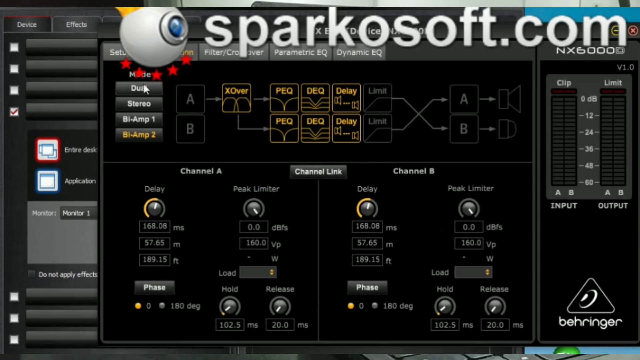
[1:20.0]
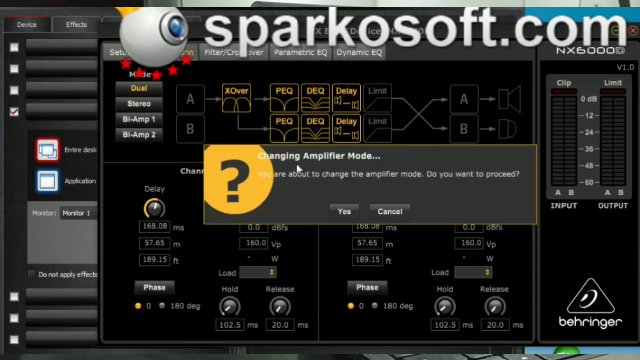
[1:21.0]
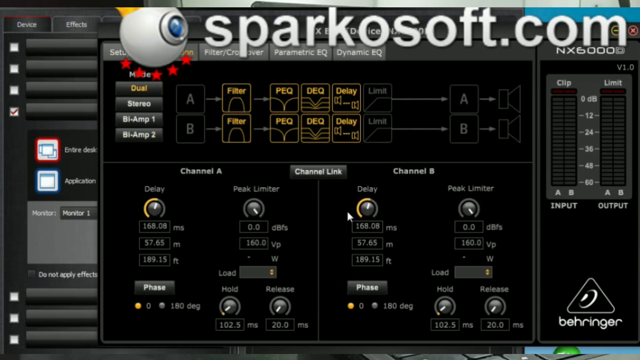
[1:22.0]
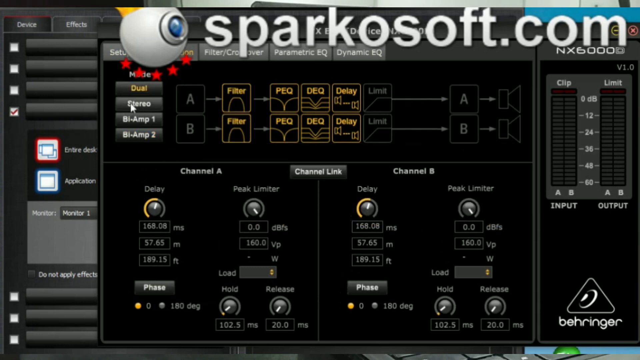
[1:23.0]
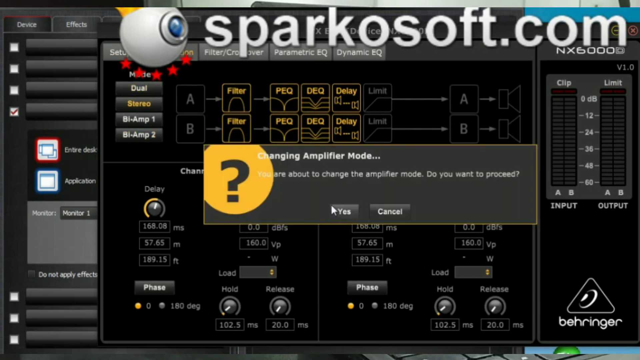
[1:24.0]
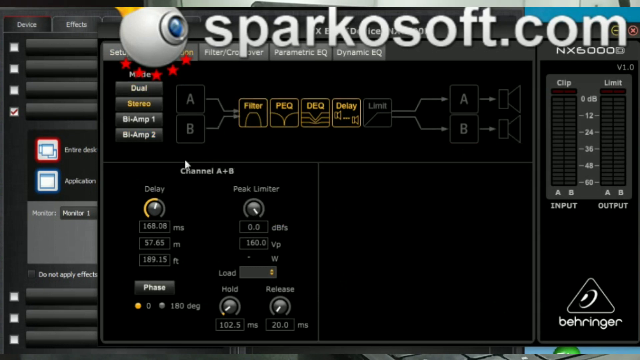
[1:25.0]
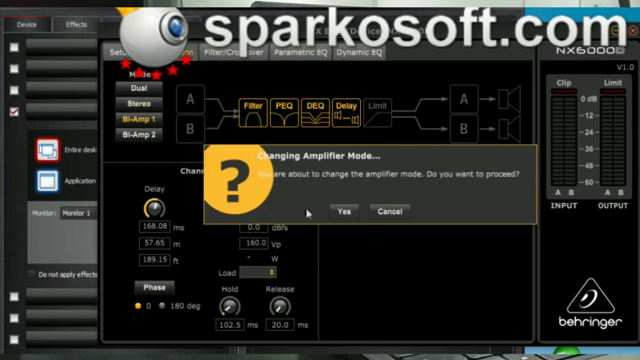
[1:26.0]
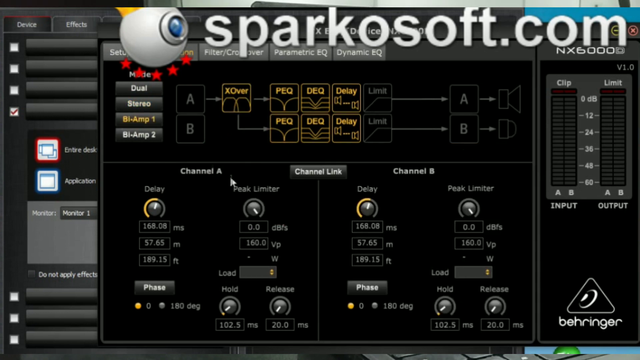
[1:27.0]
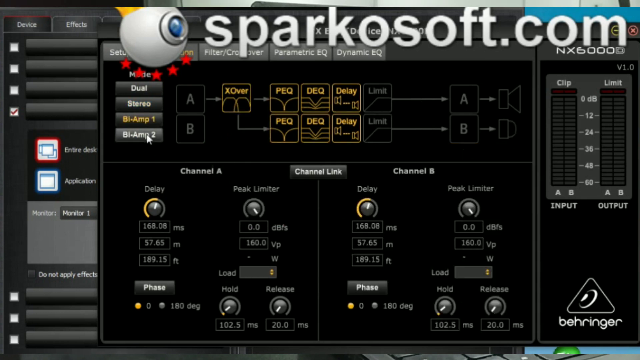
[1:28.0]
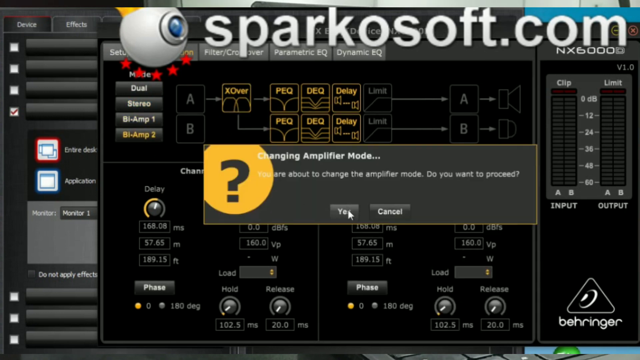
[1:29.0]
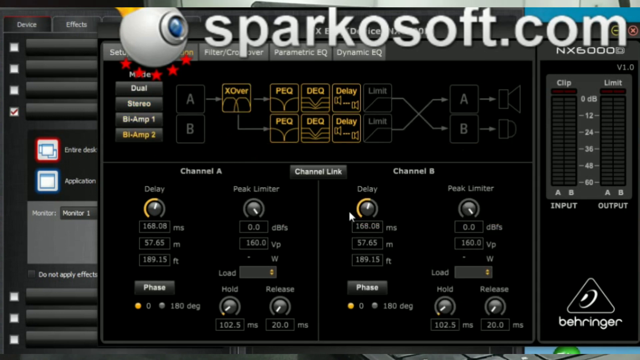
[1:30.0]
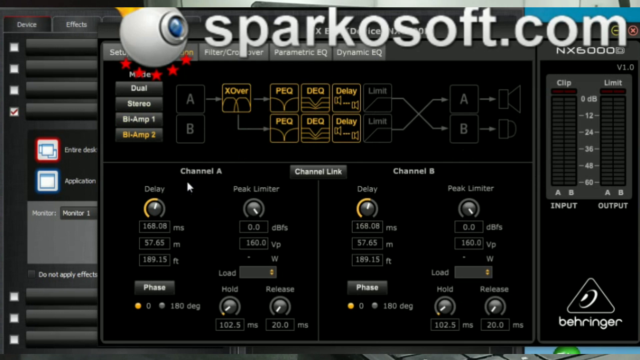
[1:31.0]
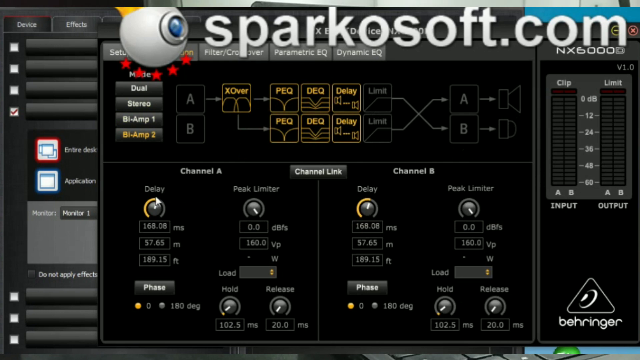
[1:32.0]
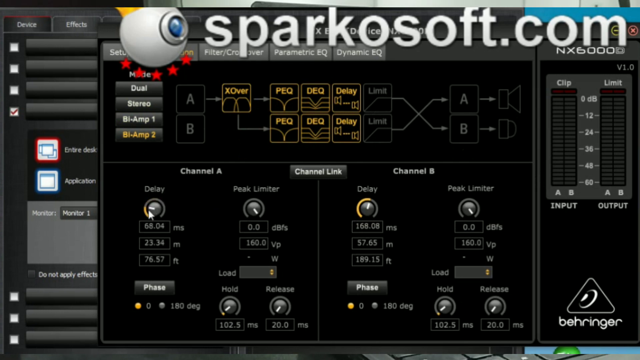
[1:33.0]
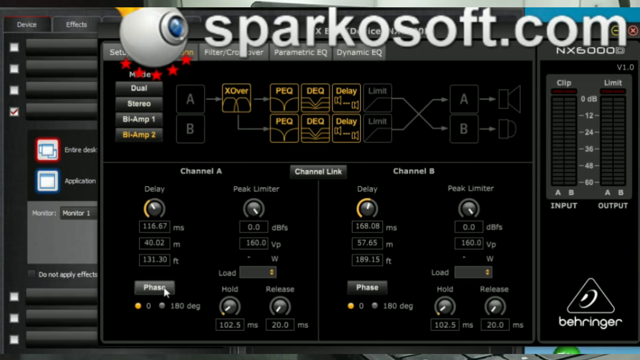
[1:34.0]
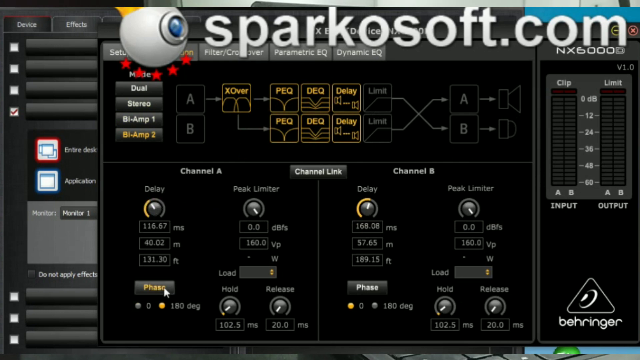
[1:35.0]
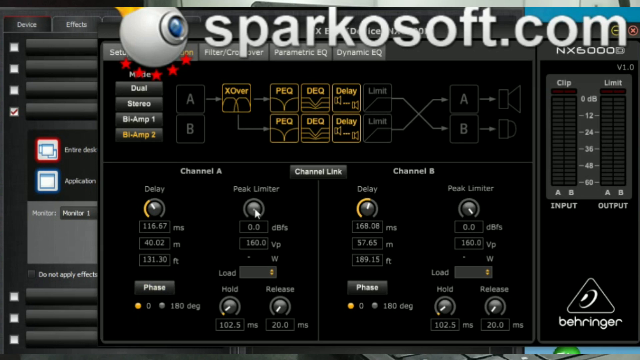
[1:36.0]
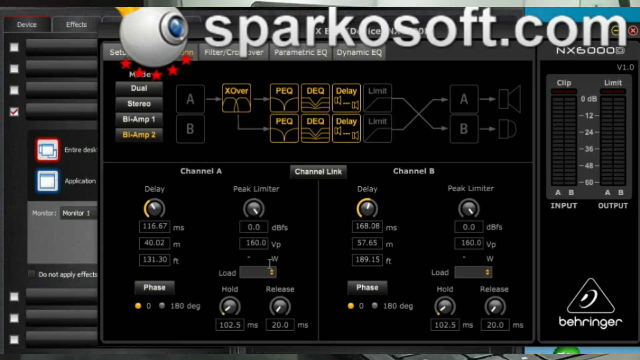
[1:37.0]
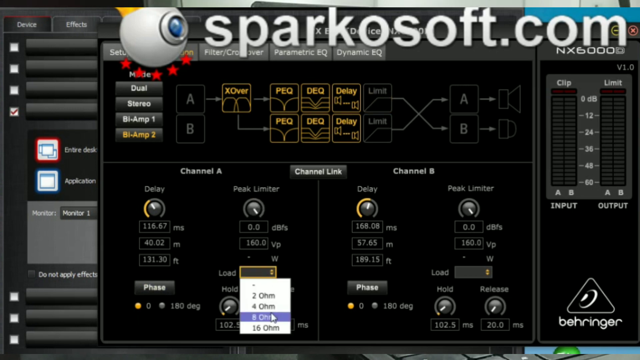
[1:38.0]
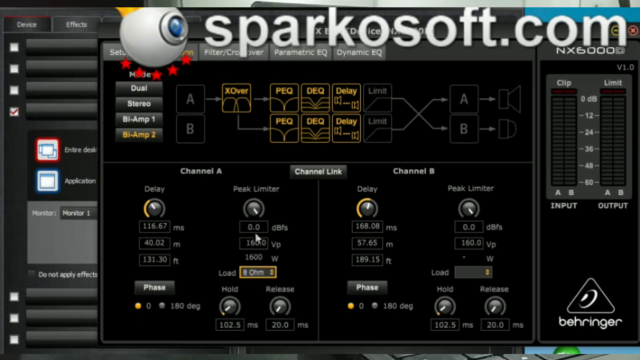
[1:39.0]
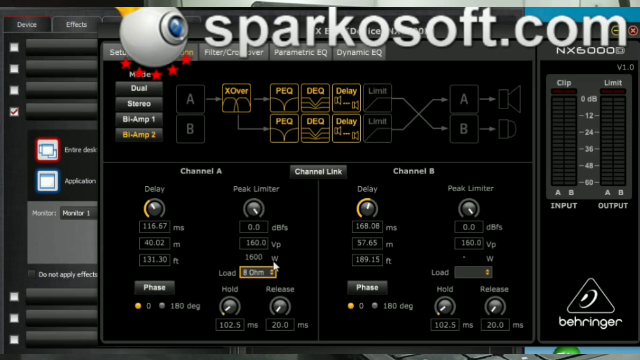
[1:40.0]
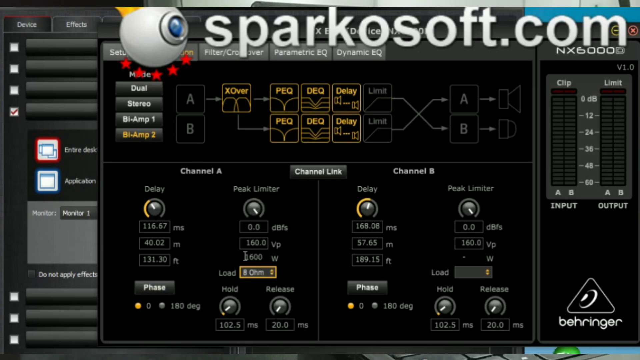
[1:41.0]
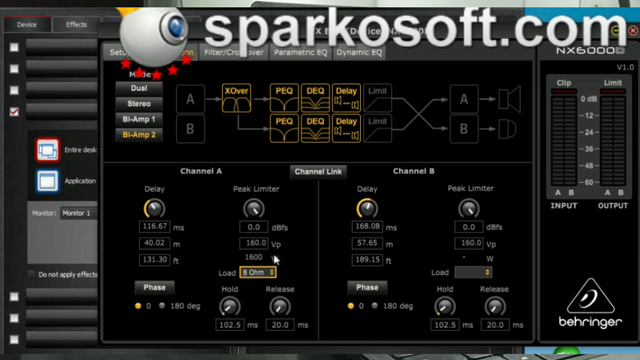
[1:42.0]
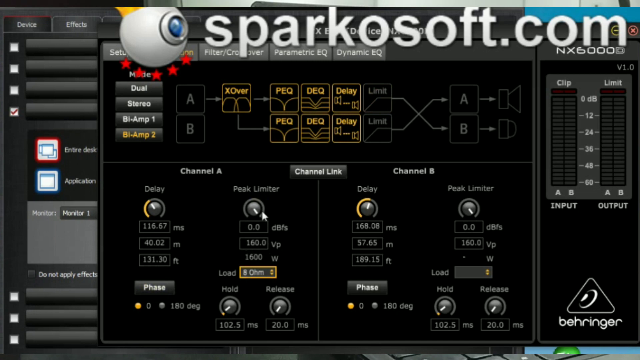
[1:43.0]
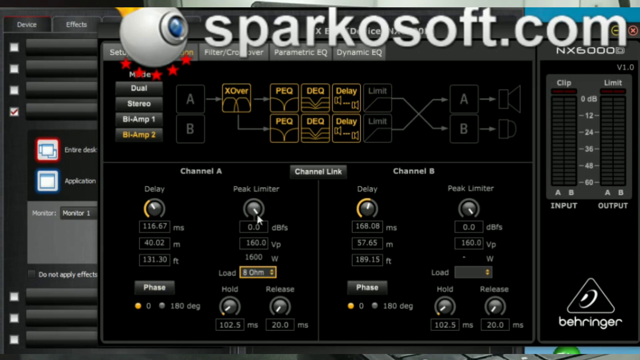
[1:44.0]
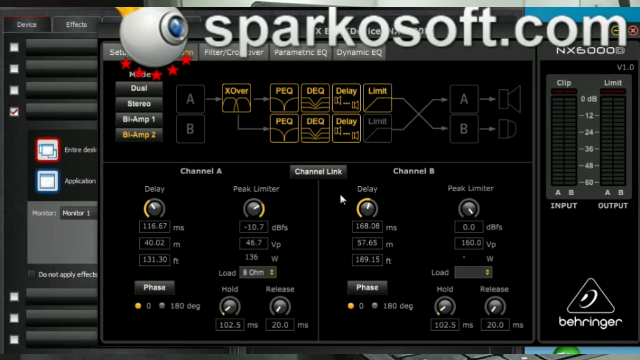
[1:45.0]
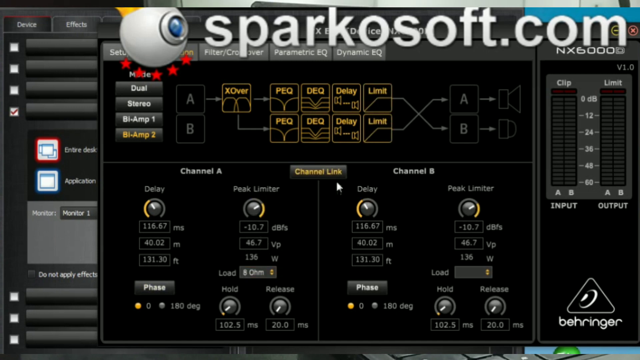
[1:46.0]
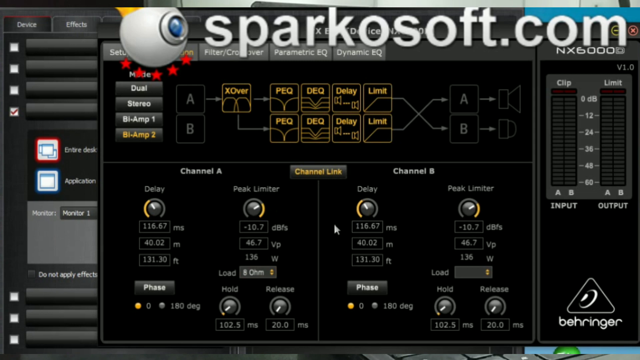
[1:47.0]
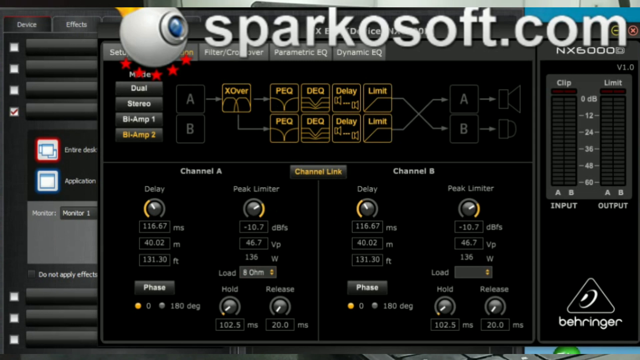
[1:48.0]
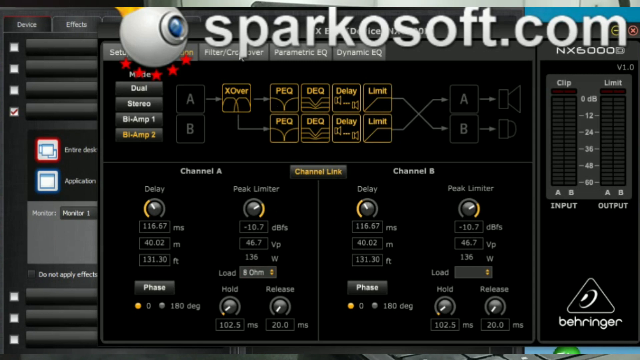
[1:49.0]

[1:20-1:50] The program screen continues to show what looks like network architecture, with "sparkosoft.com" still in very visible letters at the top of the screen, blocking some of the program. The program is in dark mode. There are buttons that say "dual", "stereo", "bi-amp 1" and "bi-amp 2". The user appears to click these, and a pop-up with the black question mark in an orange circle appears, saying "changing amplifier mode" and "You are about to change the amplifier mode. Do you want to proceed?" The user clicks yes. The user then presses the "bi-amp 1" button, the same pop-up appears, and the user presses yes again; the same happens with the "bi-amp 2" button. The user hovers over two options, "channel A" and "channel B", staying on channel A. There are two virtual knobs, one labeled "delay" and one labeled "peak limiter", and the user presses both to adjust them. The user opens a drop-down box connected to "load", selects "8 OHM", clicks "channel link", hovers over channel B, and then moves to a different window.